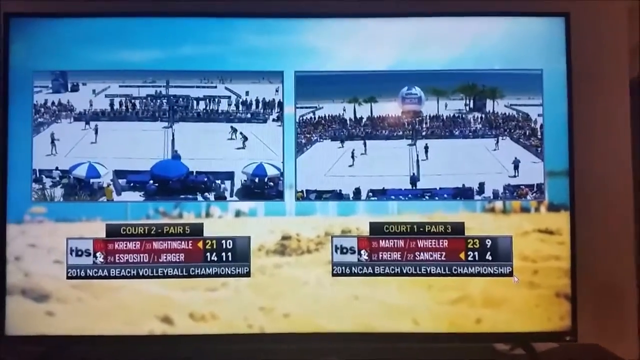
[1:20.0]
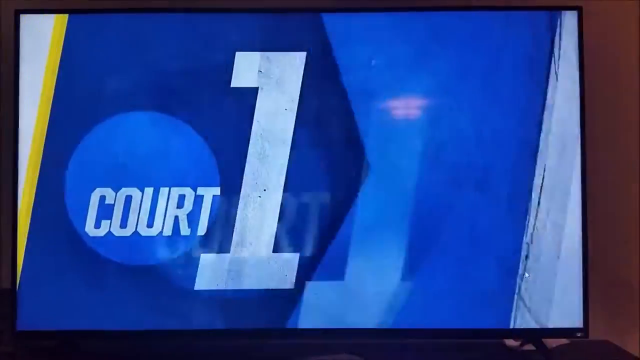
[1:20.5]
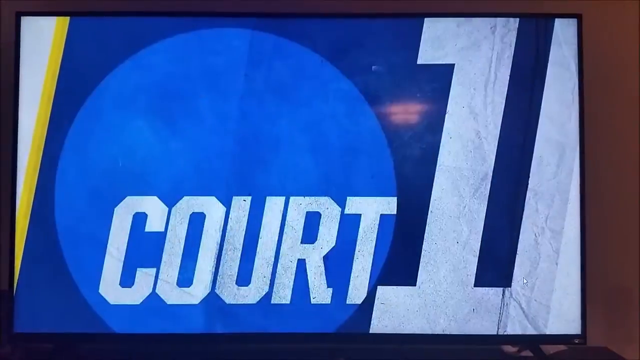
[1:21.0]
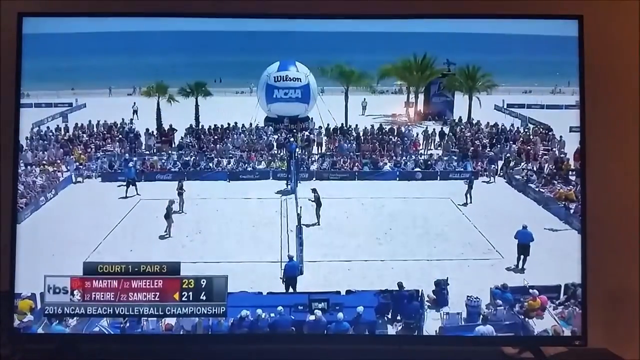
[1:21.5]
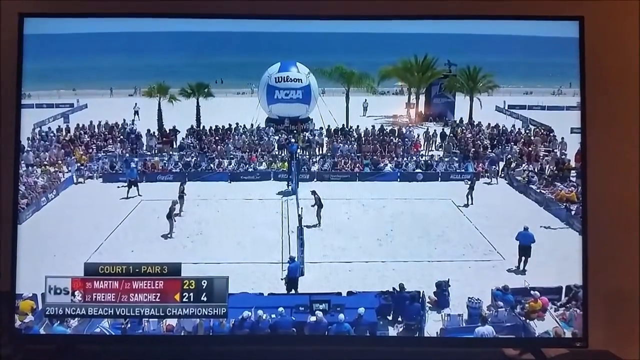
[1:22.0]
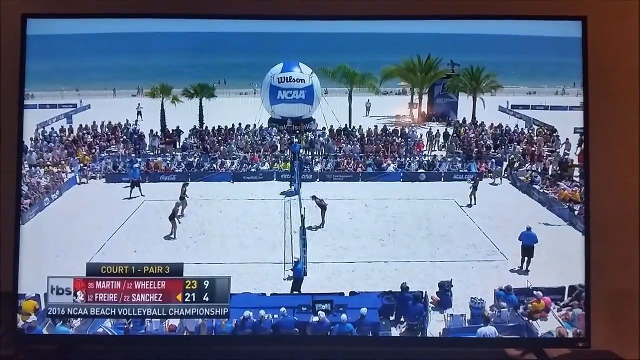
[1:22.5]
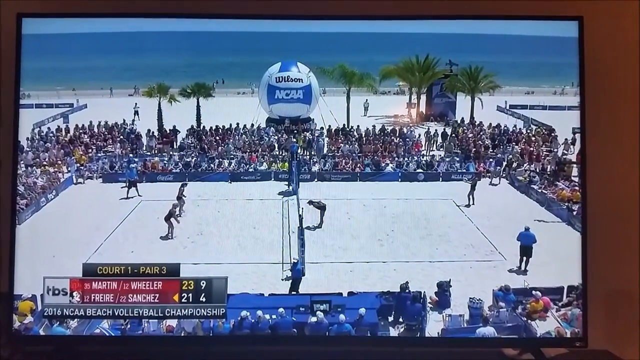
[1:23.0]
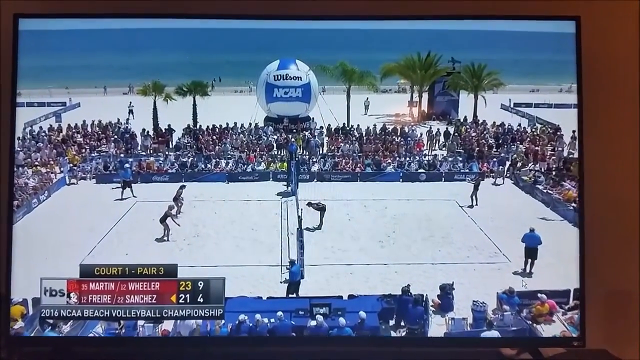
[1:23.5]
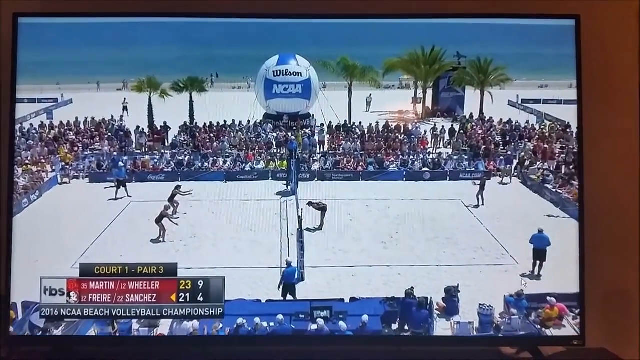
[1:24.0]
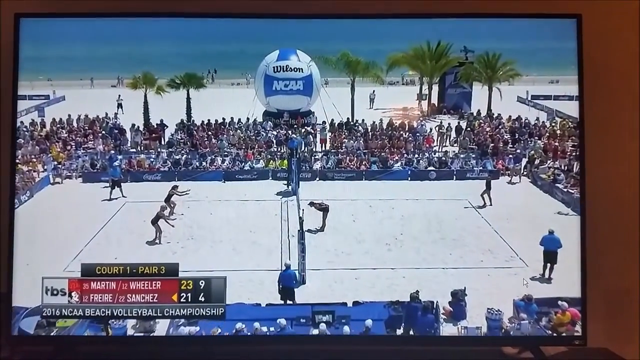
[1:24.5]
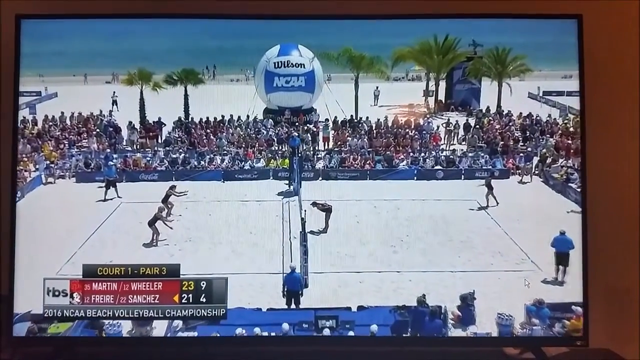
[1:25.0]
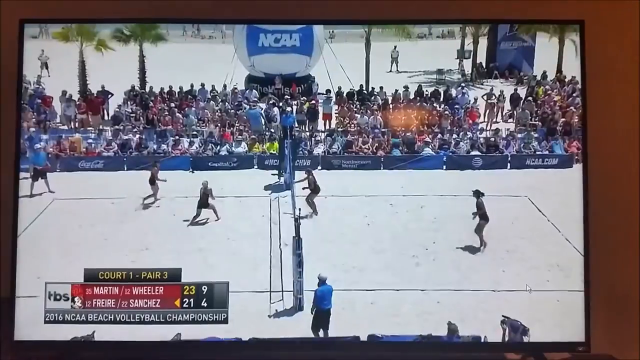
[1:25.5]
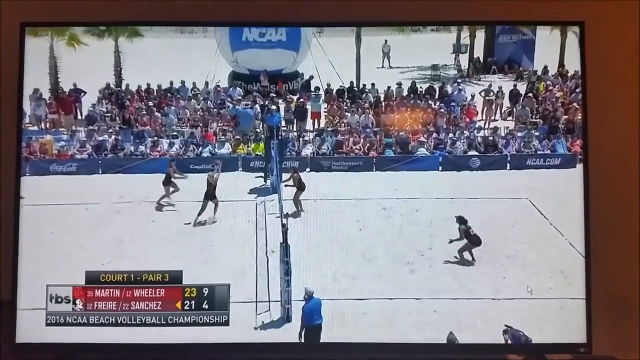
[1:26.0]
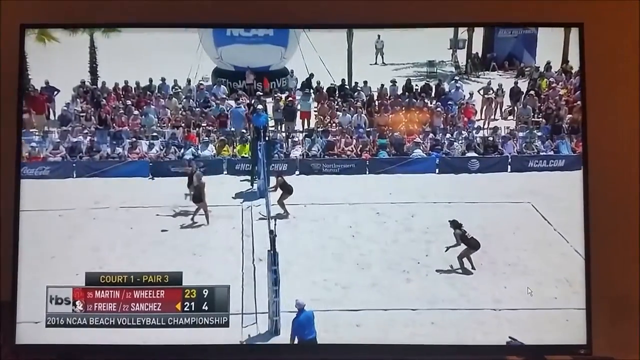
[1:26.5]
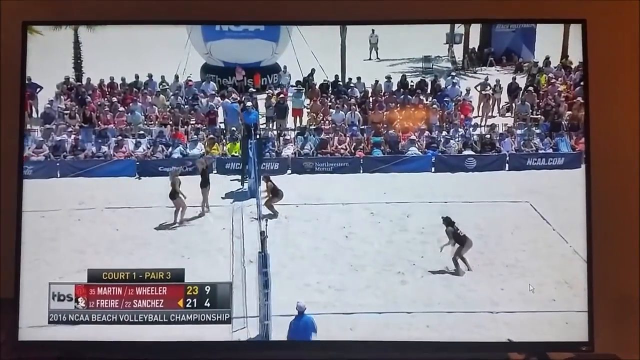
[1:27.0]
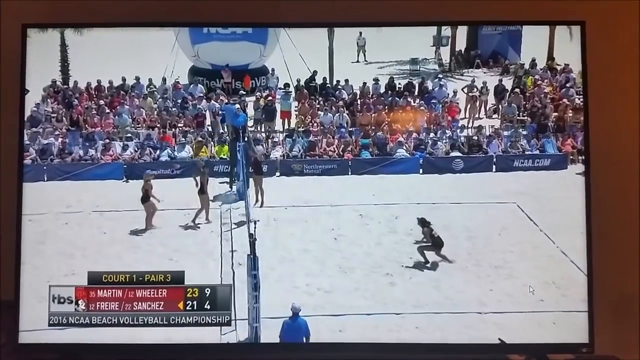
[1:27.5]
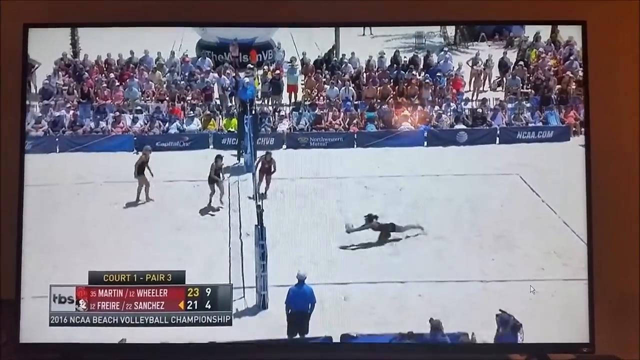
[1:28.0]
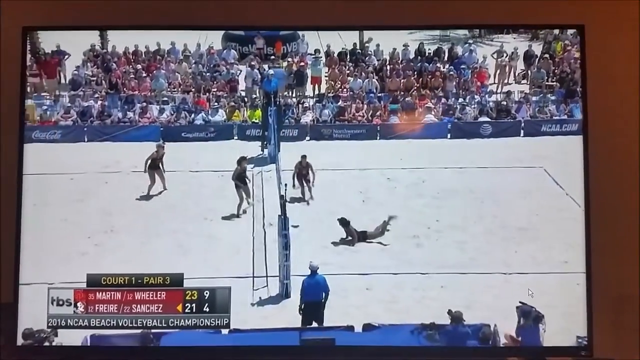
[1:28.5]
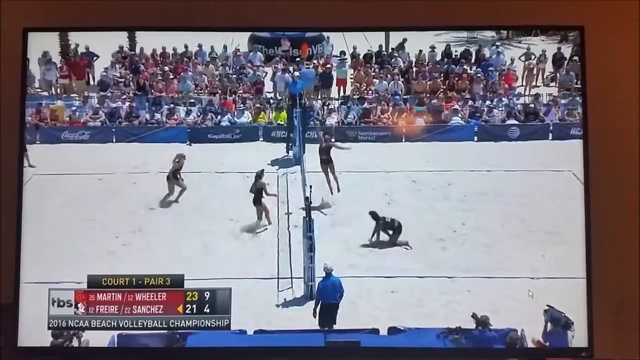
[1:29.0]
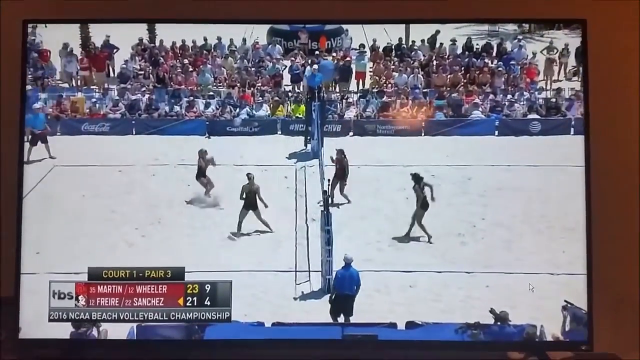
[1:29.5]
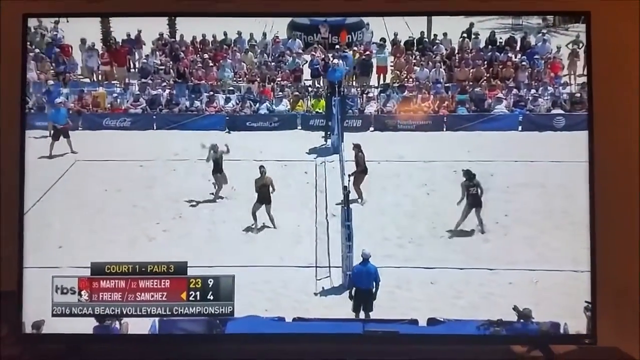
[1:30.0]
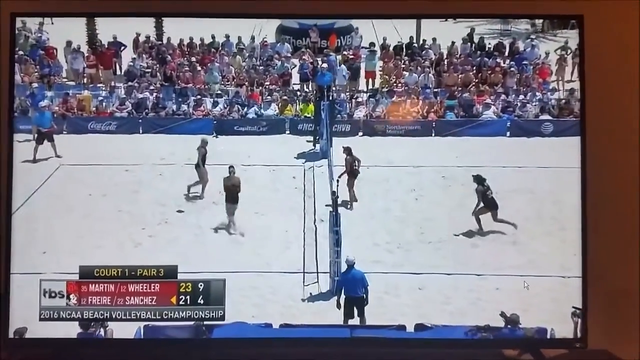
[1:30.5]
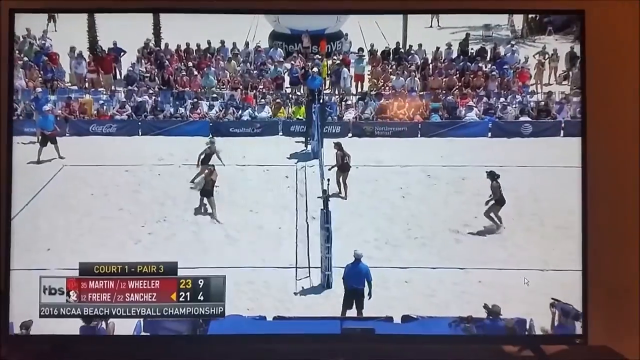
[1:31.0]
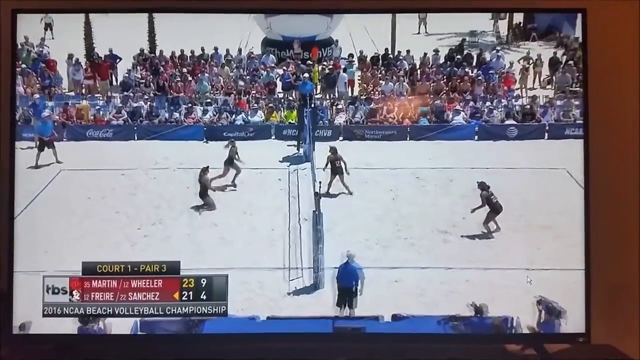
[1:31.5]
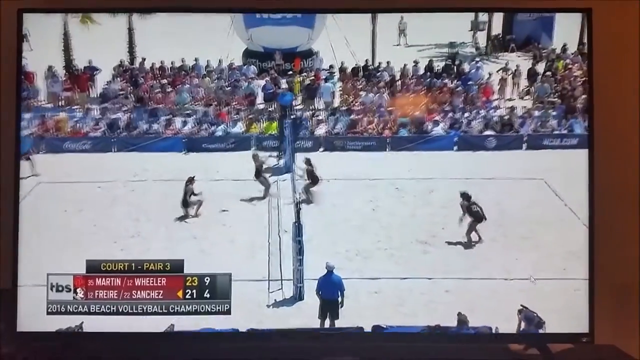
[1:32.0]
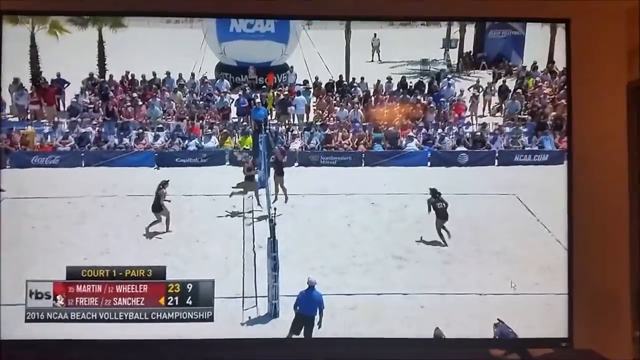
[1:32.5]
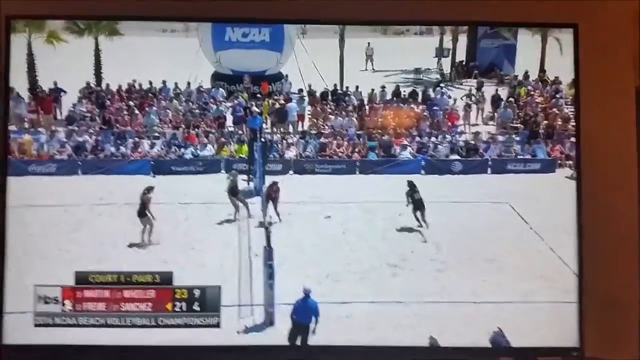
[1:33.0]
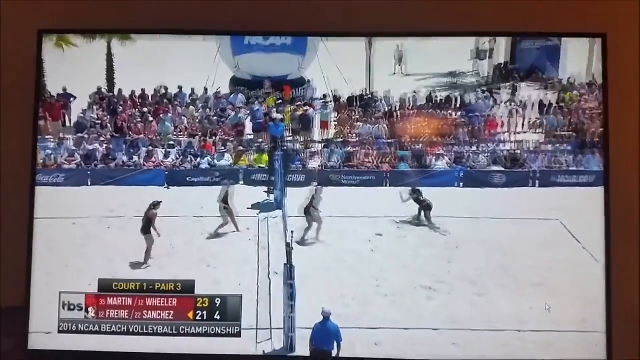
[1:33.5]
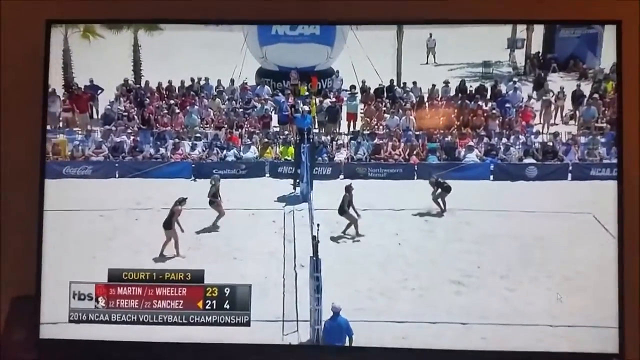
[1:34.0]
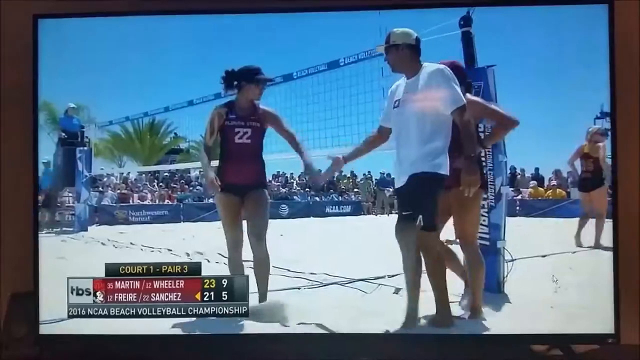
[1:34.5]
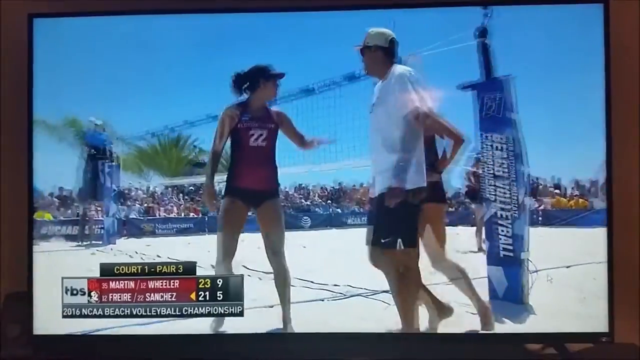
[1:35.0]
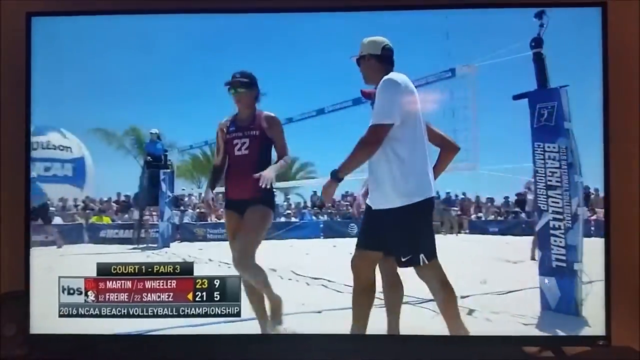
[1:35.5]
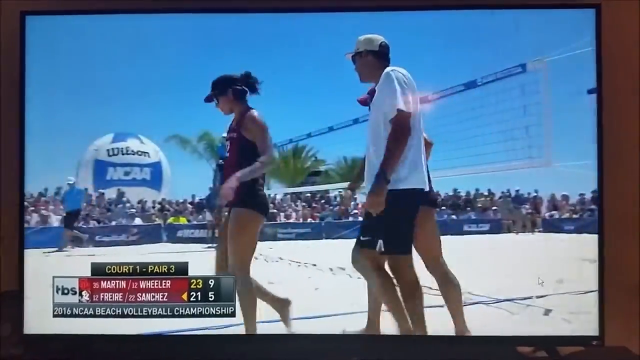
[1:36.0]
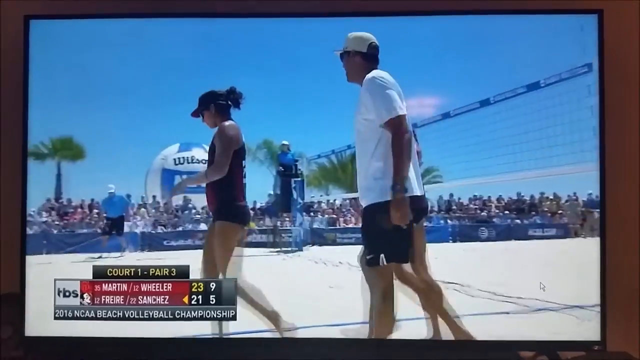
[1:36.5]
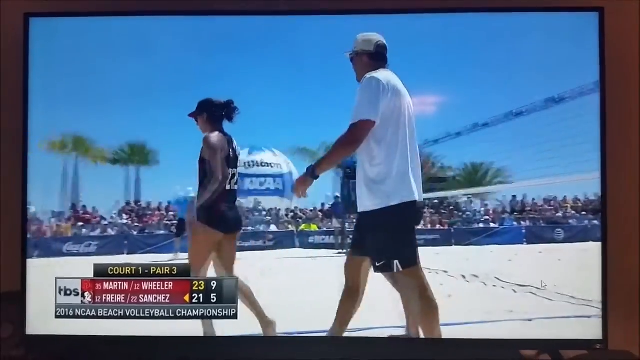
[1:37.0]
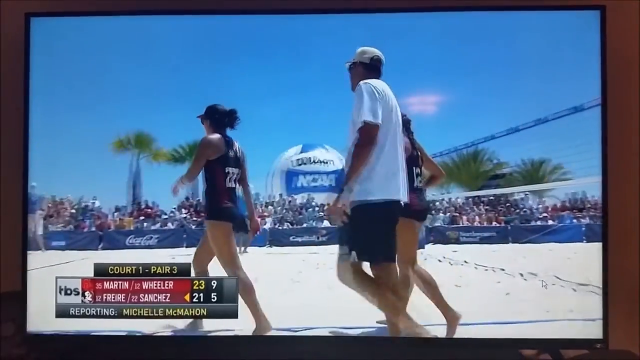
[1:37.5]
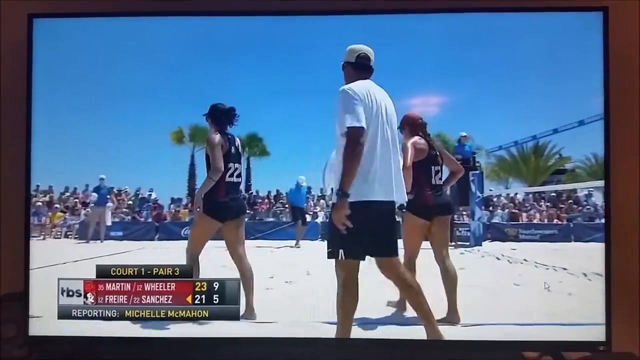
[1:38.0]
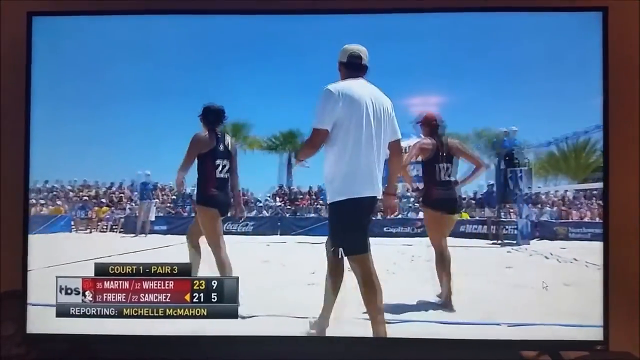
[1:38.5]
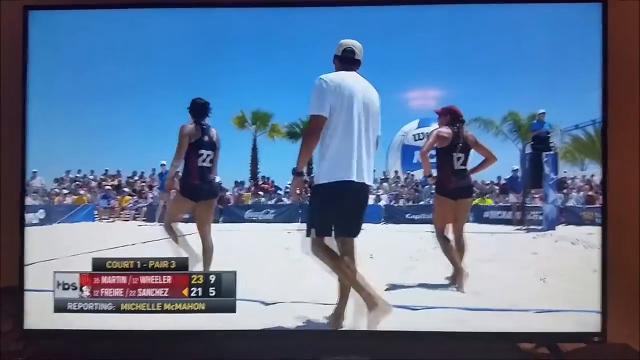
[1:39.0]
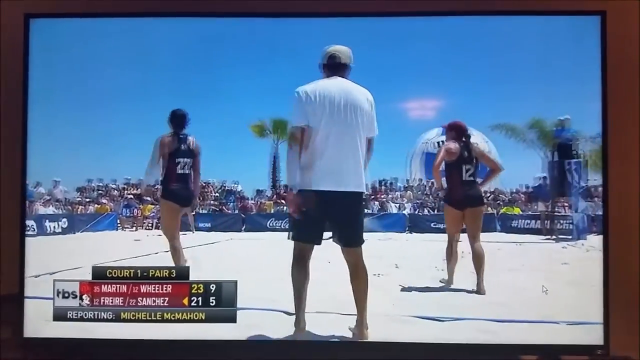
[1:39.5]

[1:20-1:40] A beach volleyball match is underway, with "NCAA Wilson" in the background. Two volleyball players compete against two other players, with many people in the audience and palm trees in the background of the beach area. Two courts are shown, with court two pair five and court one pair three playing. At the bottom is the beach environment, with the volleyball players competing at the net.